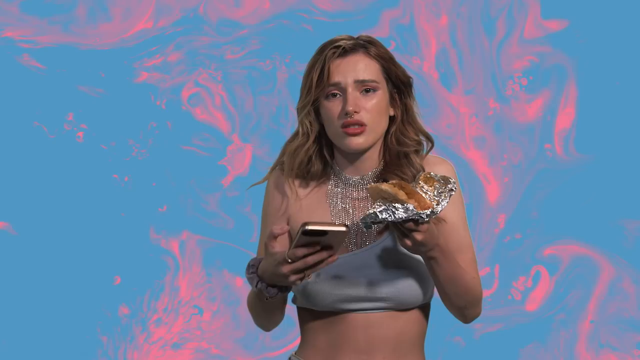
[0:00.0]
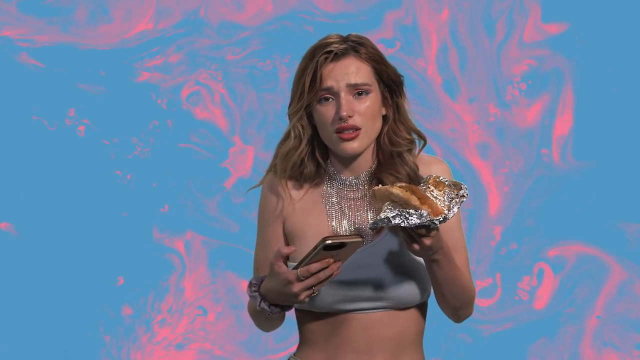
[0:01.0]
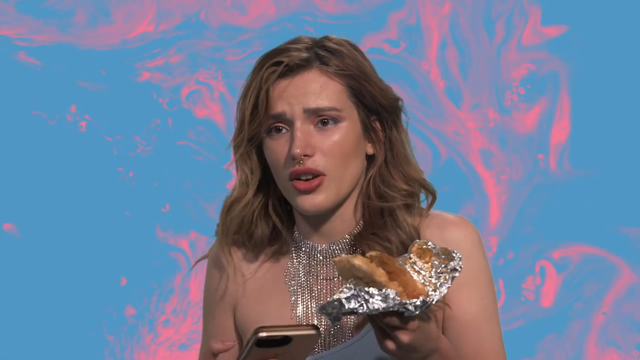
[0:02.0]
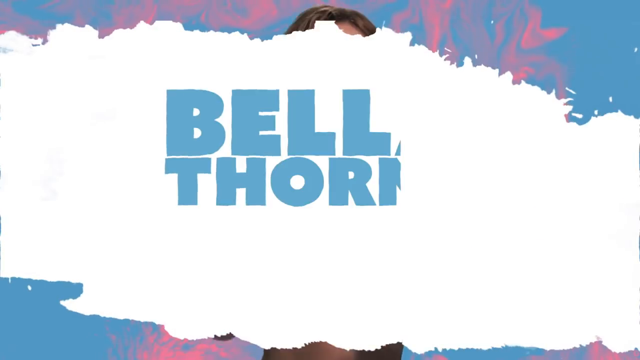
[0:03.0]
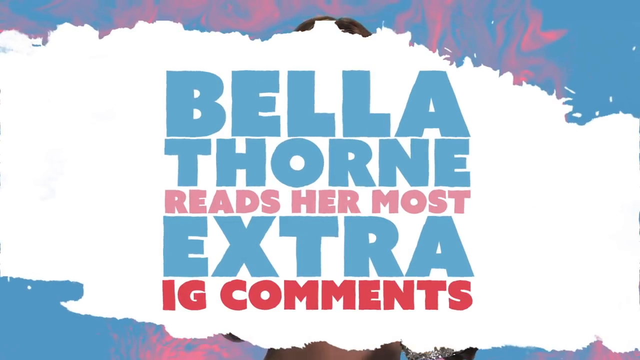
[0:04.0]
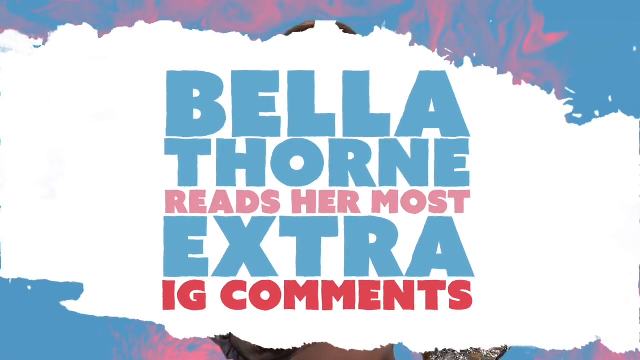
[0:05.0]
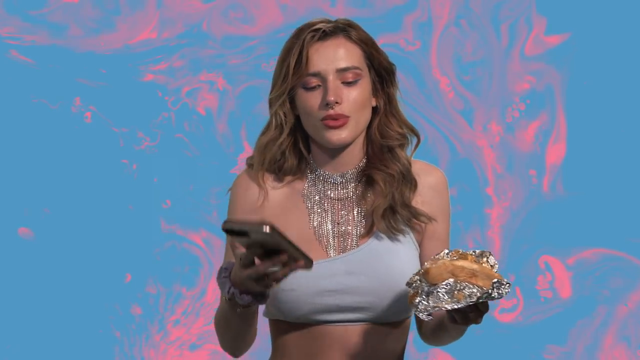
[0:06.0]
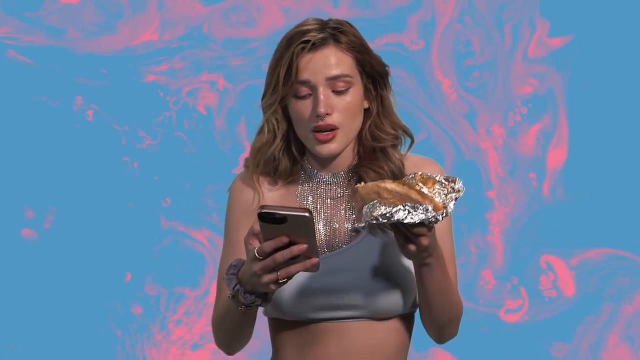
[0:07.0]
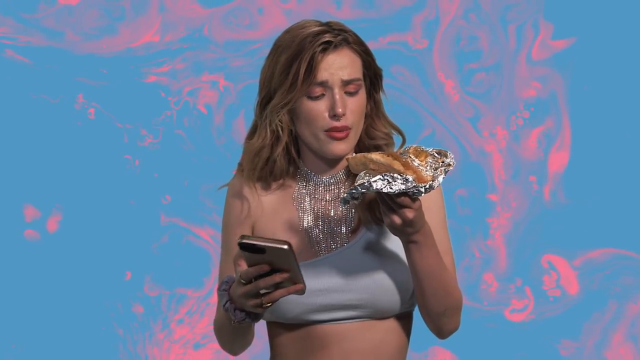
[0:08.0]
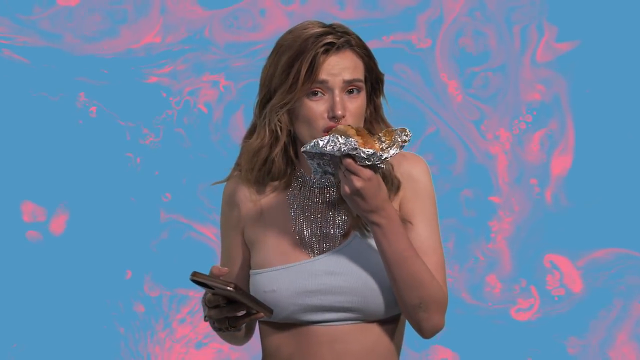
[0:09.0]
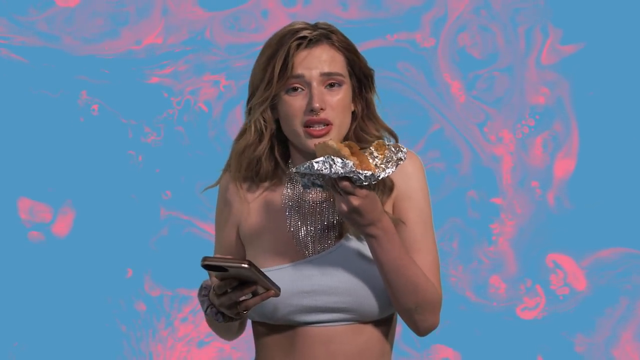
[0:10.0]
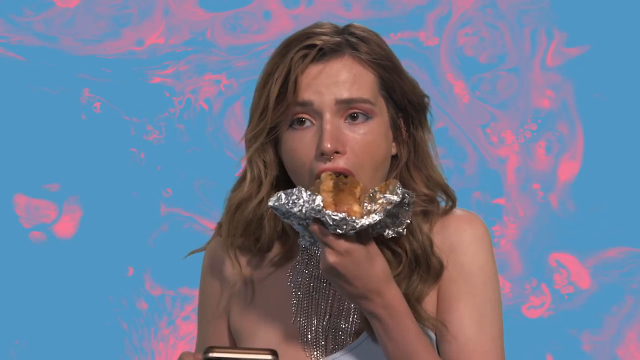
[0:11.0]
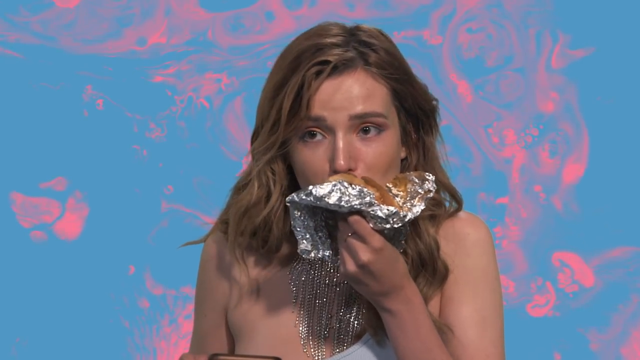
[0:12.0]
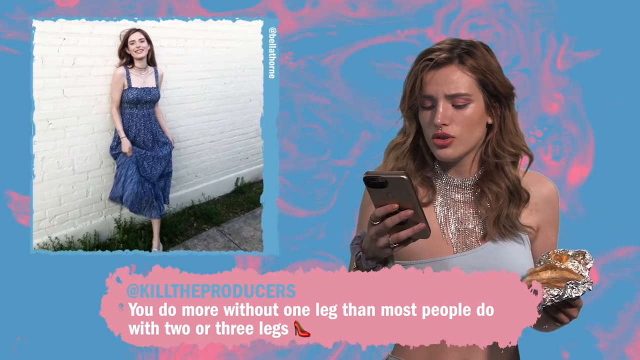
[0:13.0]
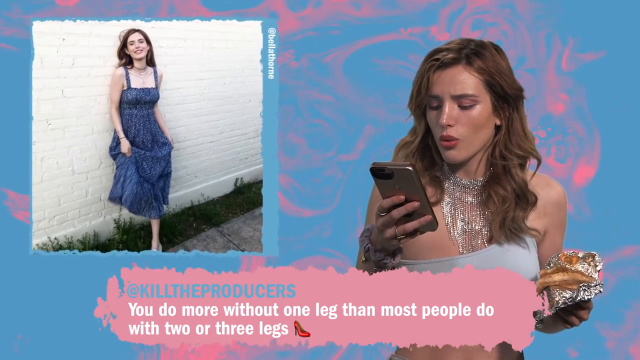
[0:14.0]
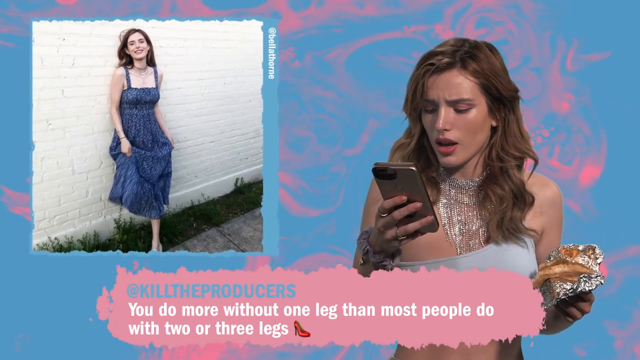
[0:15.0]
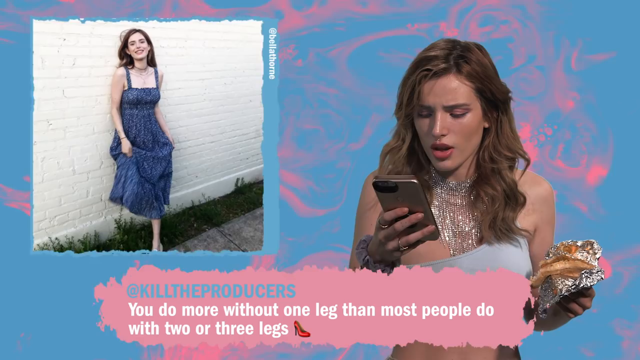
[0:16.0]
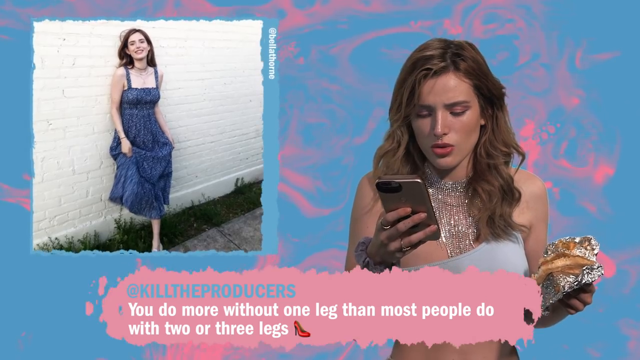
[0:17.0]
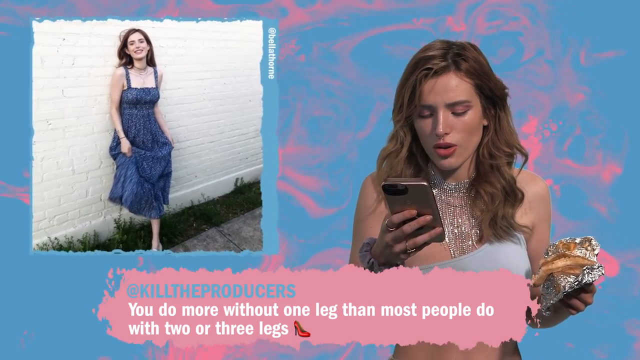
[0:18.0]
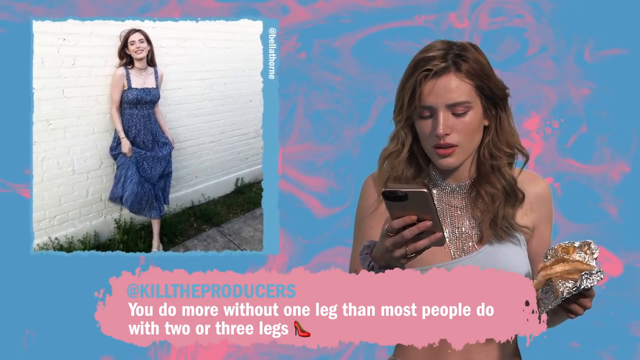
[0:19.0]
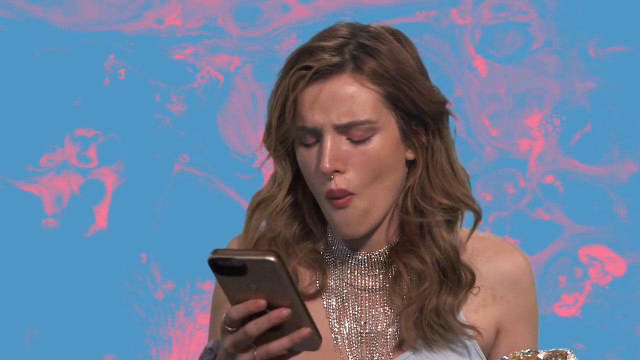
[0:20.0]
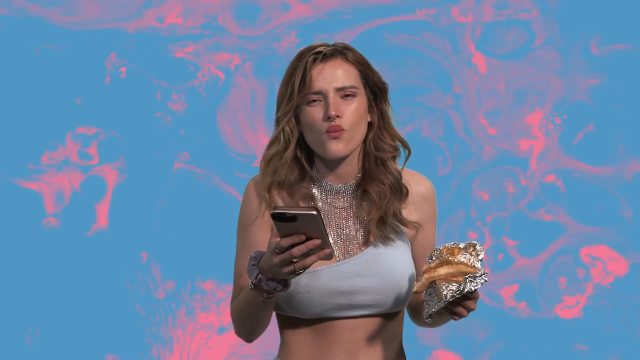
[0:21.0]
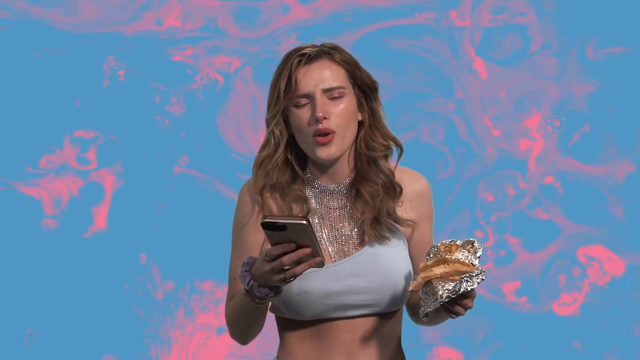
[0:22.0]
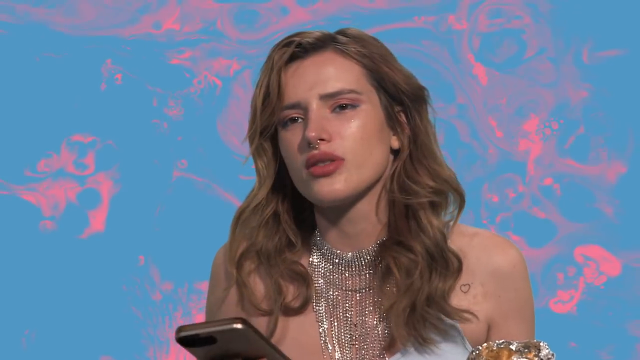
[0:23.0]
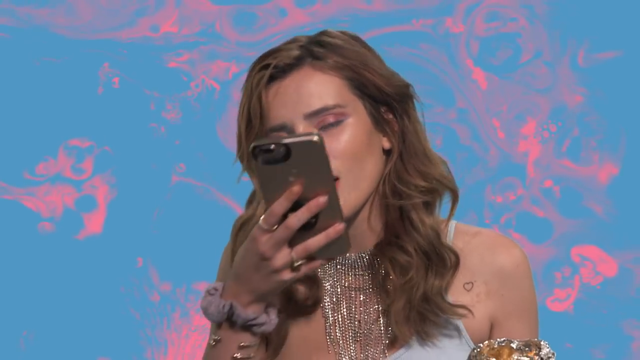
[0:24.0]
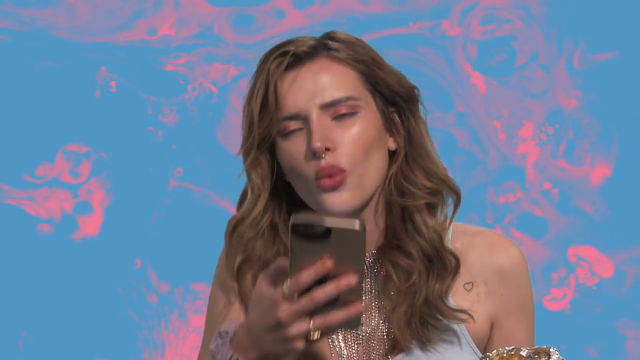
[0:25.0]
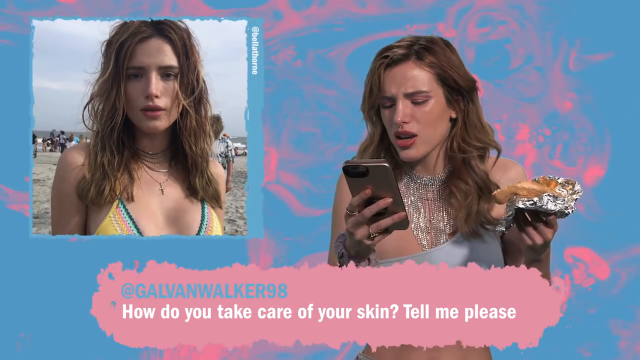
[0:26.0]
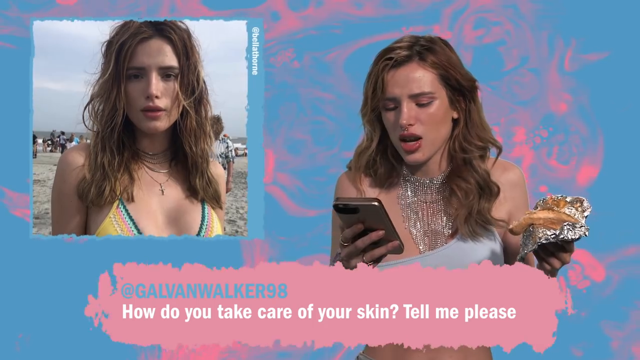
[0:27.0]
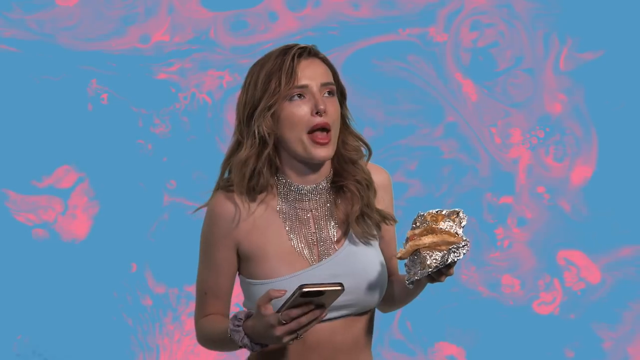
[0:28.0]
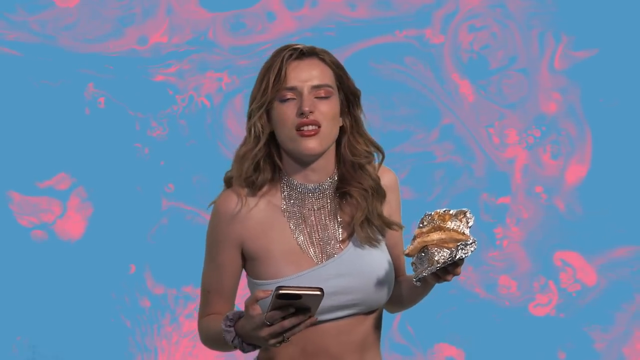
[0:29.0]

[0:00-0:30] A woman is in the foreground against a blue and pink background. She holds her phone in her right hand and, in her left hand, what is either a sandwich or aluminum foil. She wears revealing clothing that covers her chest area, a very fancy necklace, and something on her wrist; her hair is between blonde and brunette, and she has makeup on. A splash-like graphic then appears with the text "Bella Thorne reads her most extra IG comments." She seems full of confidence, eating and joking as she reads. She looks at a picture of herself along with one of the comments chosen for it, and her reaction seems a bit surprised and weird. The video then cuts to another of her photos, where someone asks about her skincare, and her reaction is a bit unreadable.